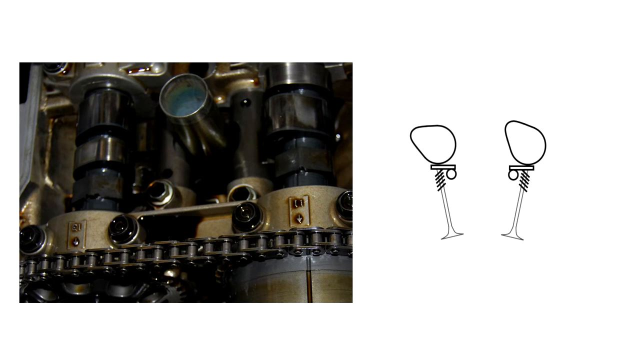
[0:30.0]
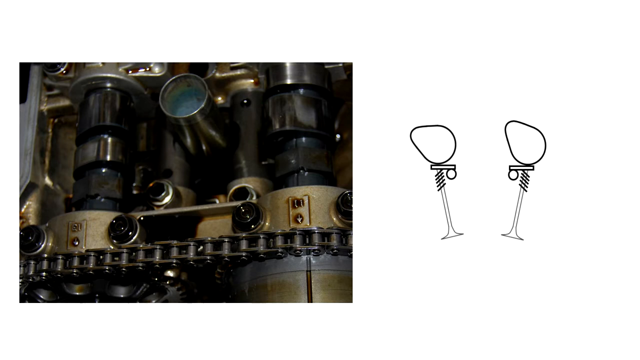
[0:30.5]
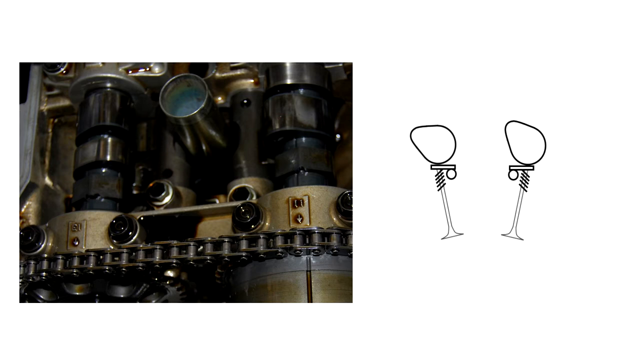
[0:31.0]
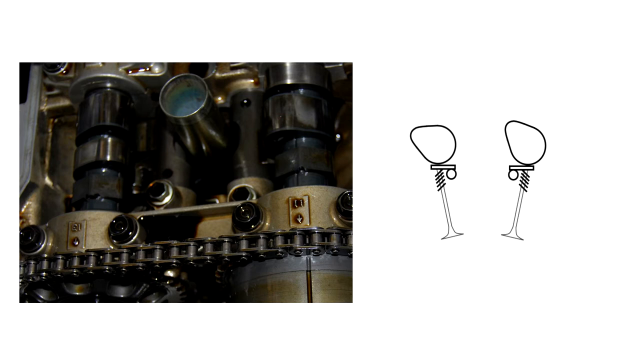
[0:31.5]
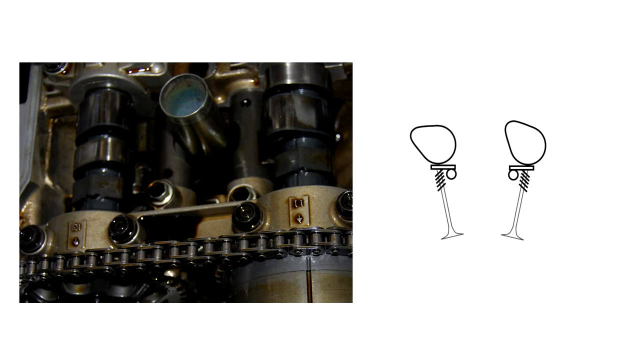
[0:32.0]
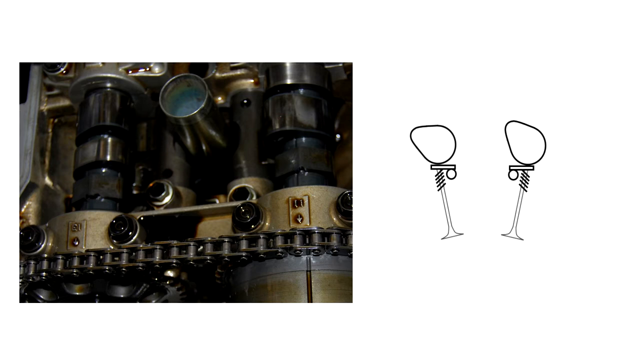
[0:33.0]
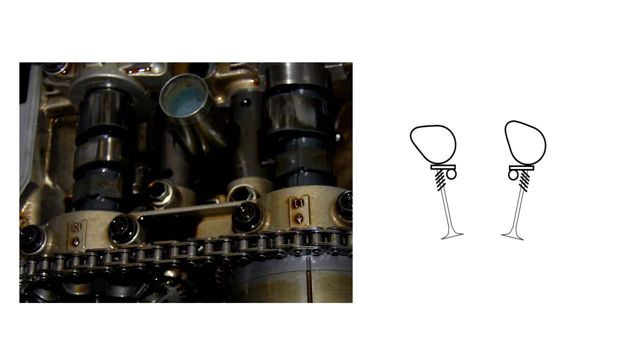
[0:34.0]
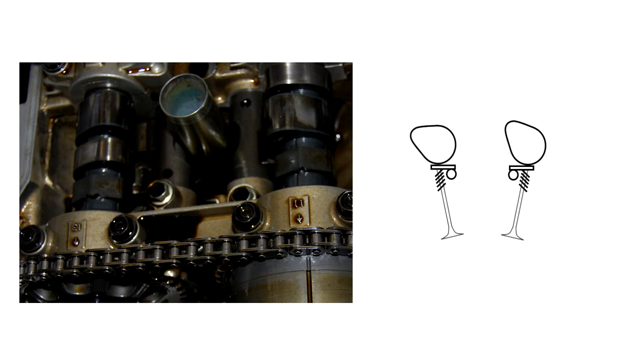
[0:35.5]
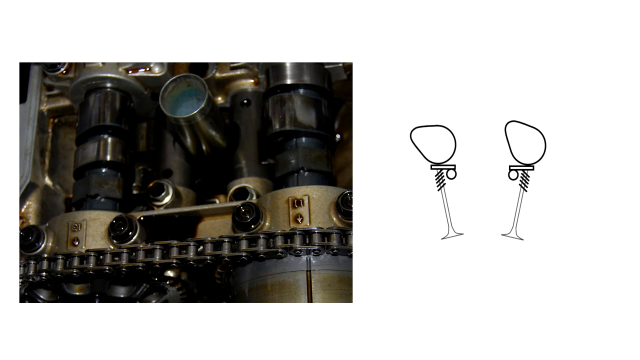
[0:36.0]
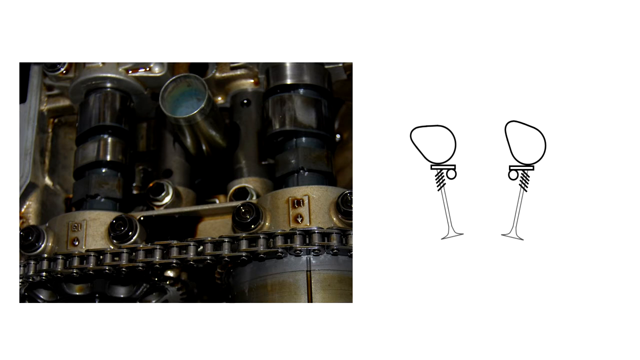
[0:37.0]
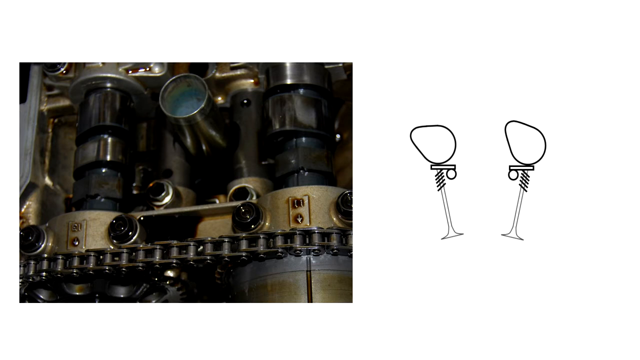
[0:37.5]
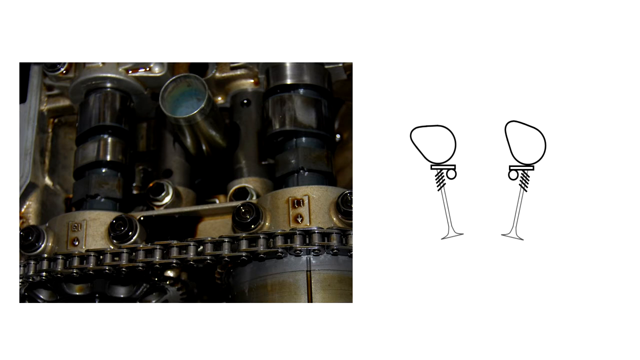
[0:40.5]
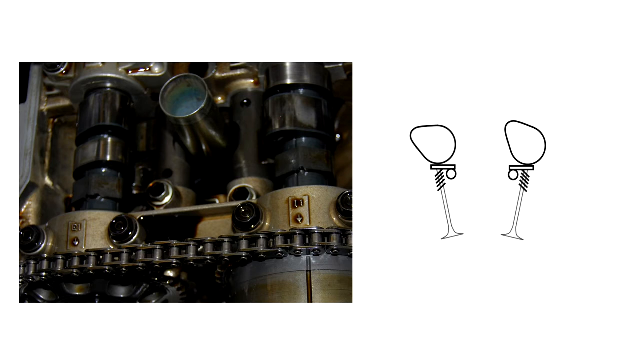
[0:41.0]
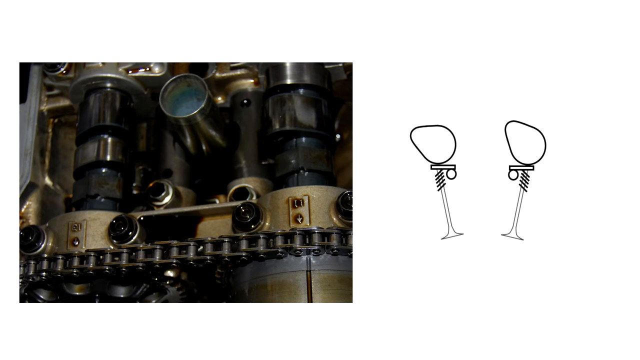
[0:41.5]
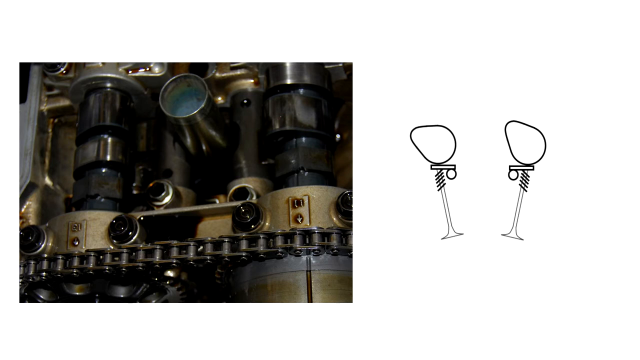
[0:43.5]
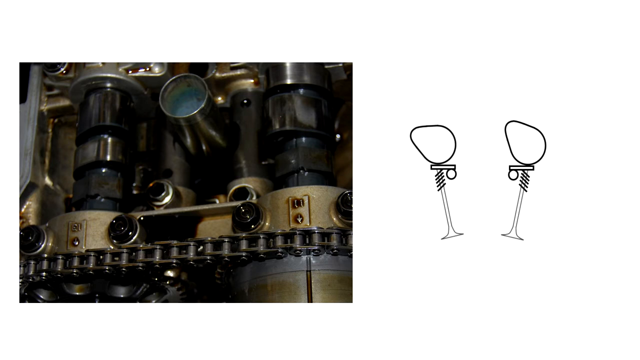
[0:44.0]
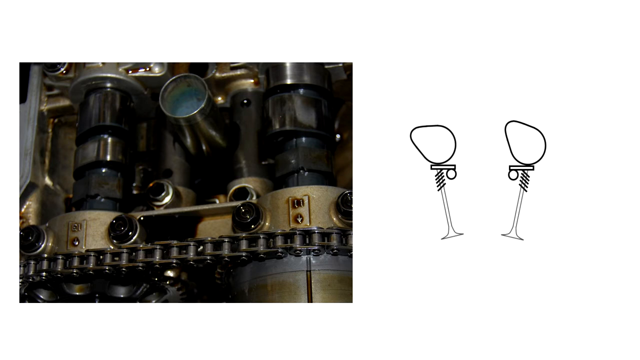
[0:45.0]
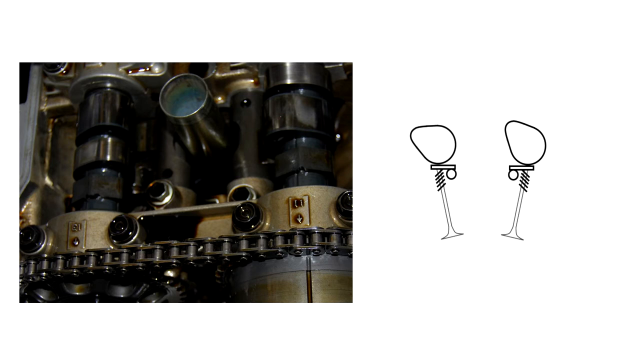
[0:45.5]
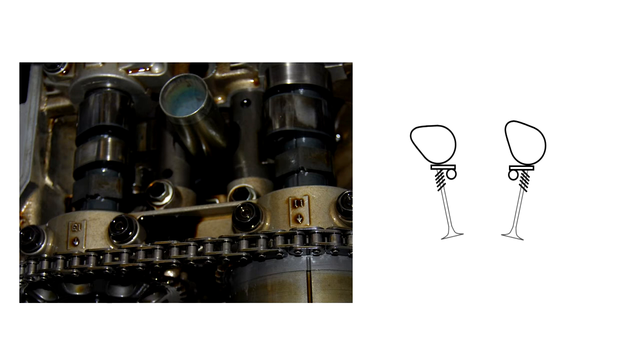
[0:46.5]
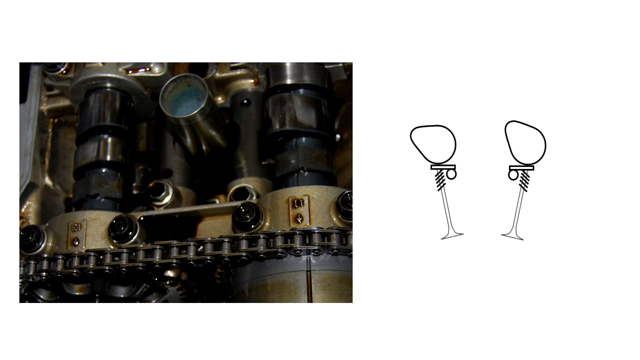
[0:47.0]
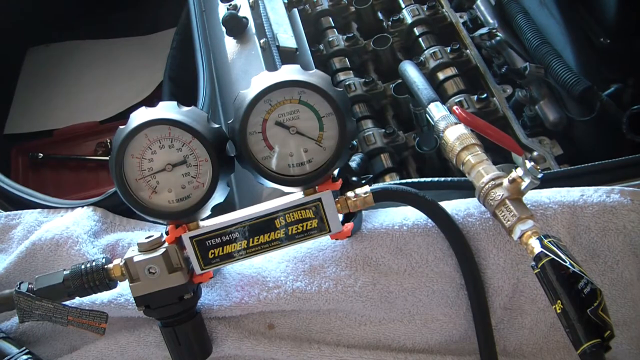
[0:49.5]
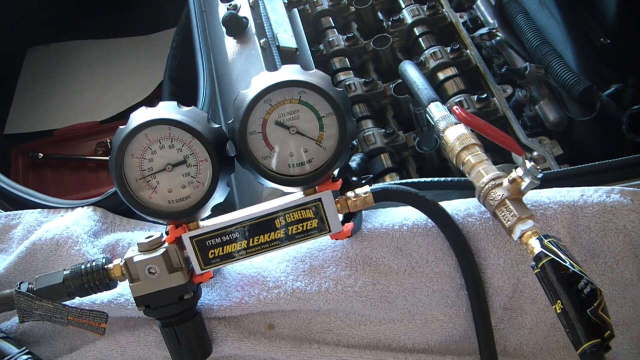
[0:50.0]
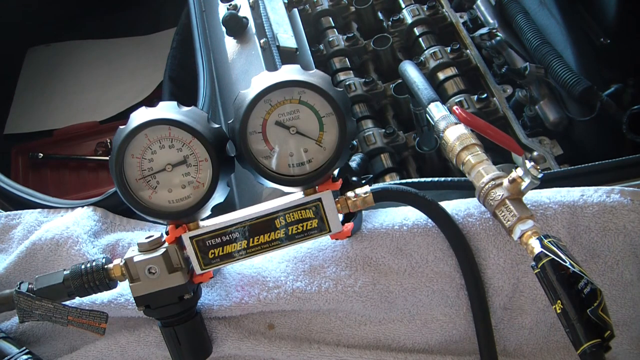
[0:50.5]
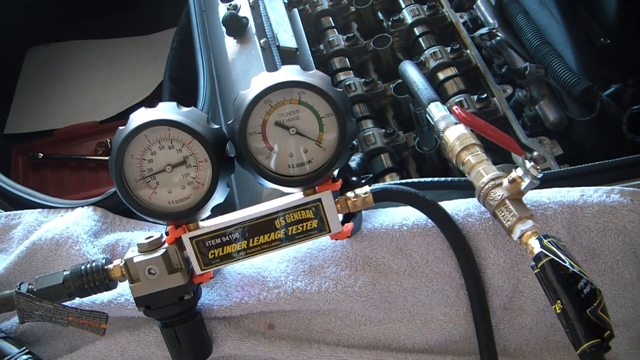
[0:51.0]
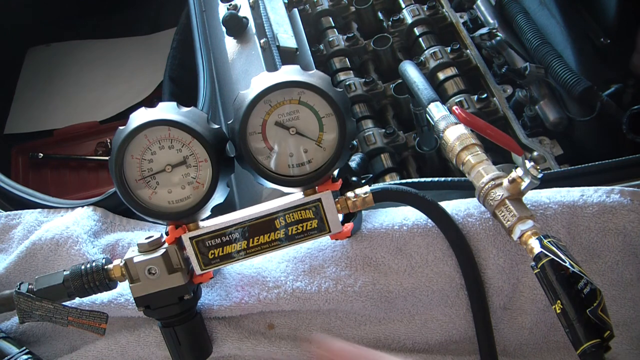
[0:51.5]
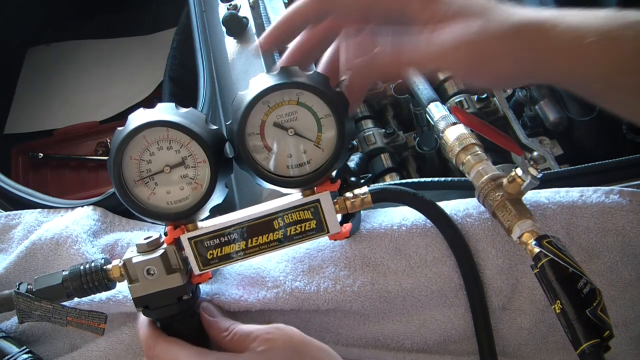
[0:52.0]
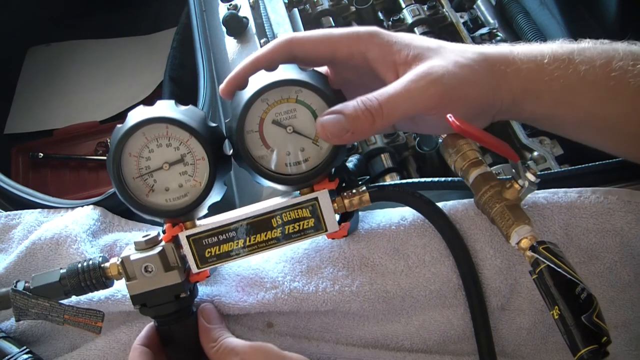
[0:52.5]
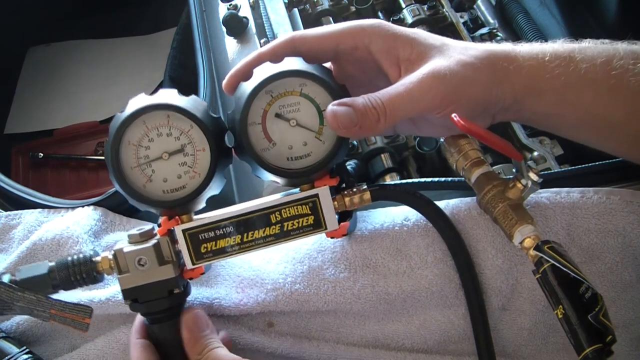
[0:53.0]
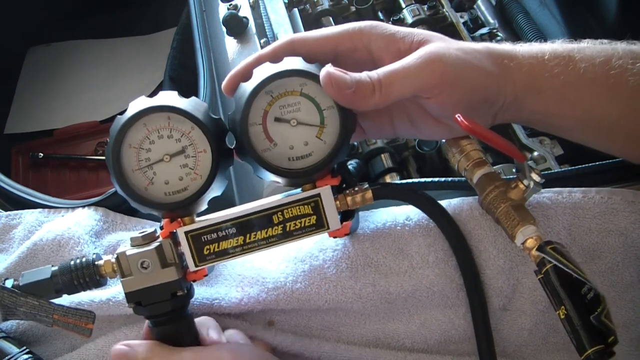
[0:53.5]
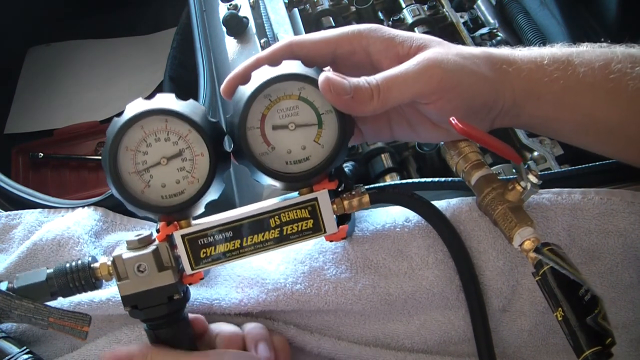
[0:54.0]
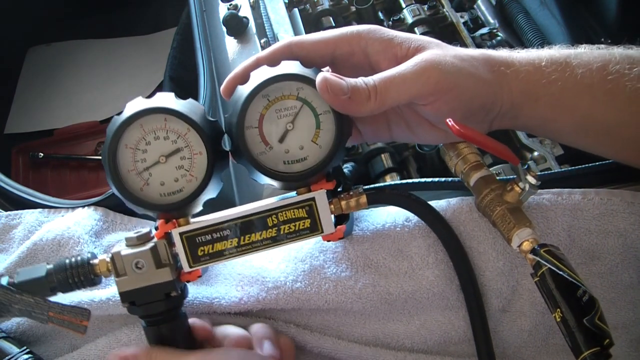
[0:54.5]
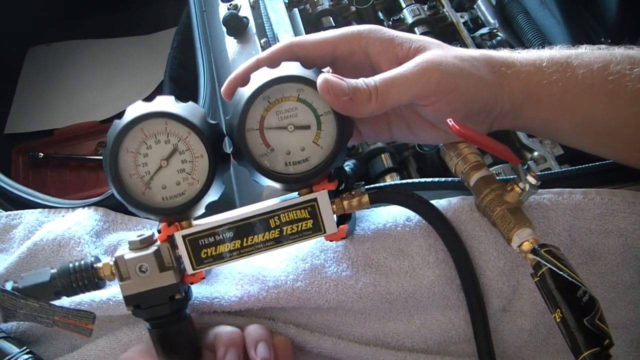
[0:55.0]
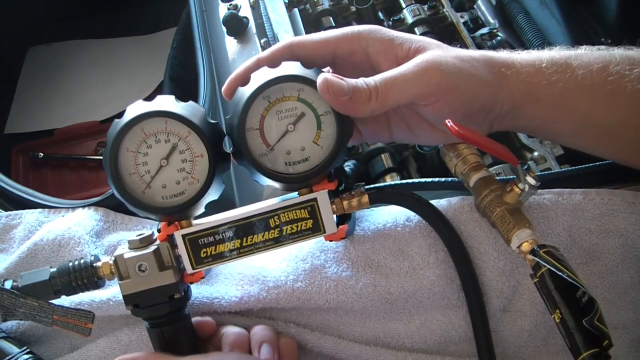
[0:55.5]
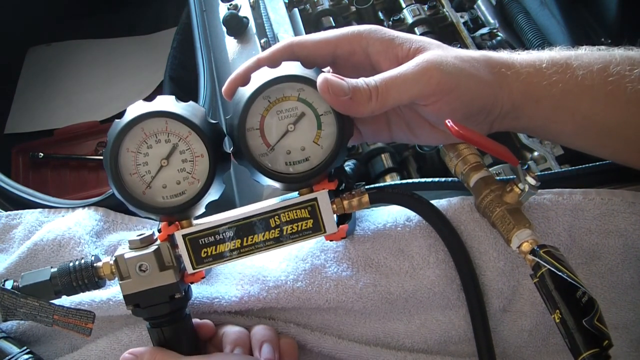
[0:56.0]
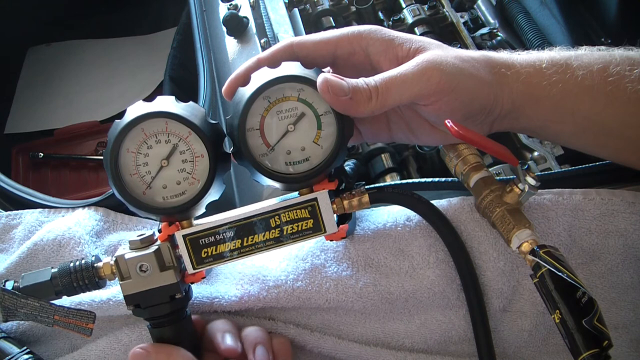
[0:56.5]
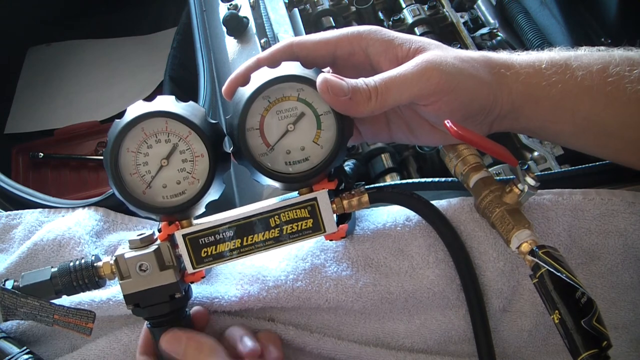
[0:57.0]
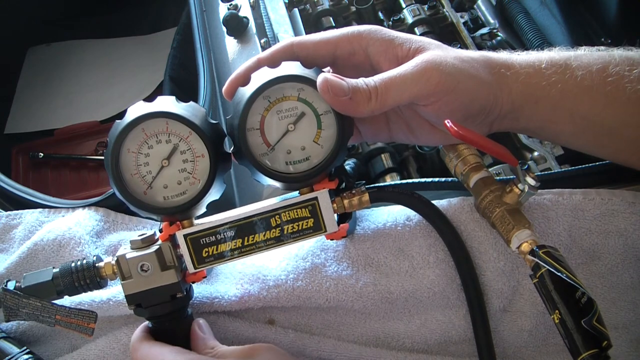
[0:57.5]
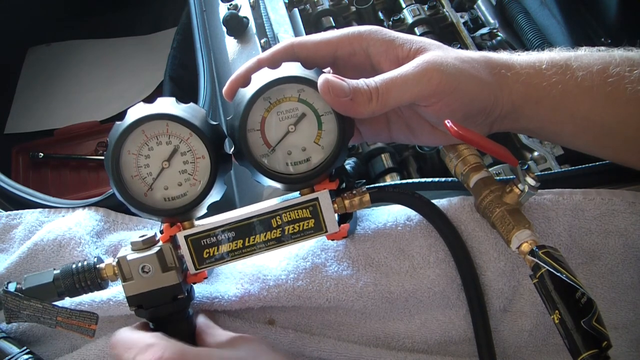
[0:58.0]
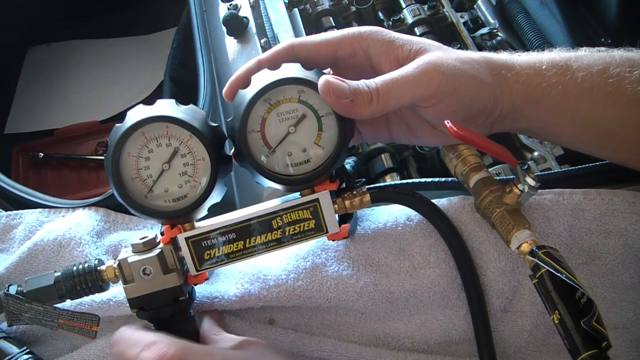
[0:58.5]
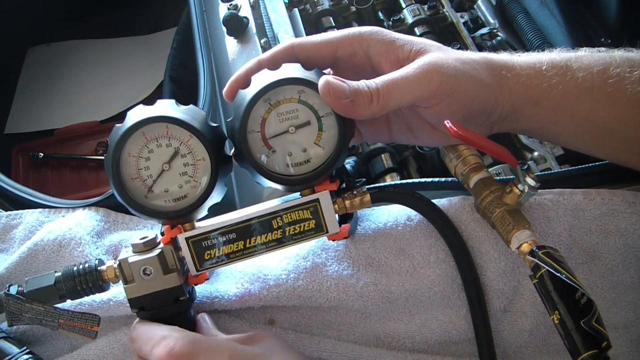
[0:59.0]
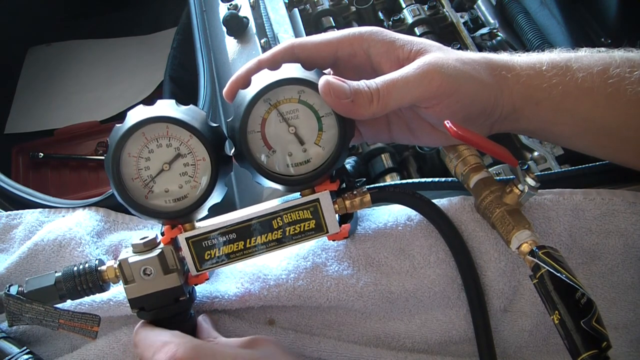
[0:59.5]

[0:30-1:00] On the left side of the screen is a picture from above of a timing chain pulley and the housing, with the chain going up over the top of the first sprocket and over the second sprocket. The video cuts to a shot of two air gauges on a small silver box, which has "U.S. General Cylinder Leakage Tester" written on it in yellow. A black hose comes off the left side of the box and another black hose comes off the right side. Behind the gauge is a row of pistons of a car motor. On the end of the black hose connected to the leakage tester is a red handle, facing straight up. Everything is on a white towel. A hand comes in from the left side of the screen, grabs the tester and turns it so it is seen more clearly in front of the camera, and the needle in the gauge moves.